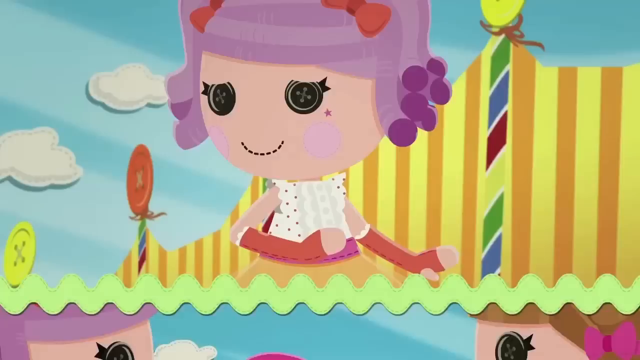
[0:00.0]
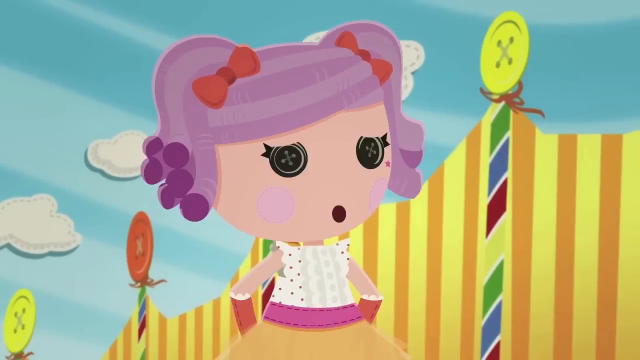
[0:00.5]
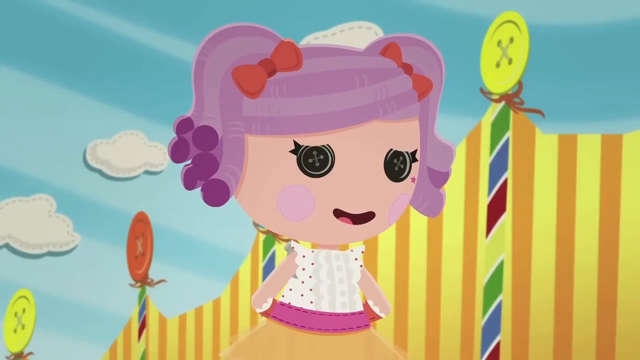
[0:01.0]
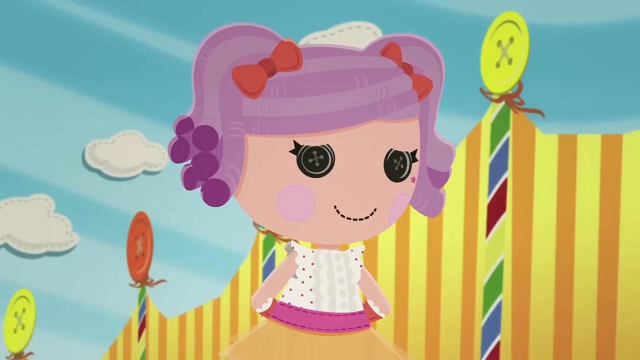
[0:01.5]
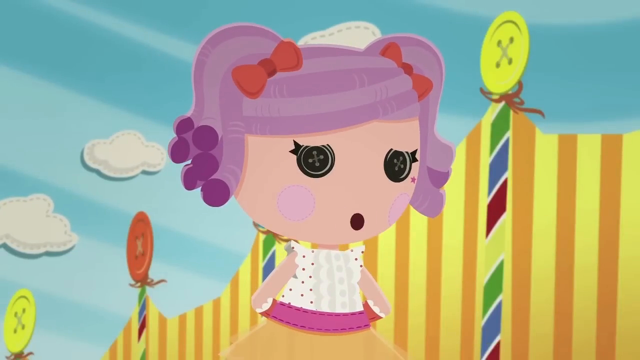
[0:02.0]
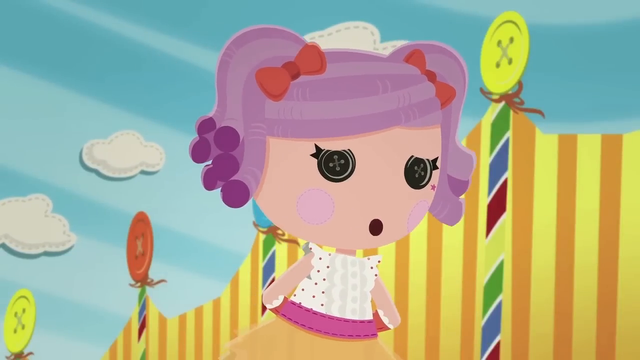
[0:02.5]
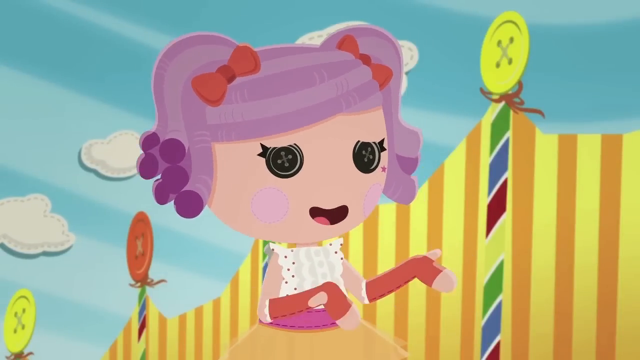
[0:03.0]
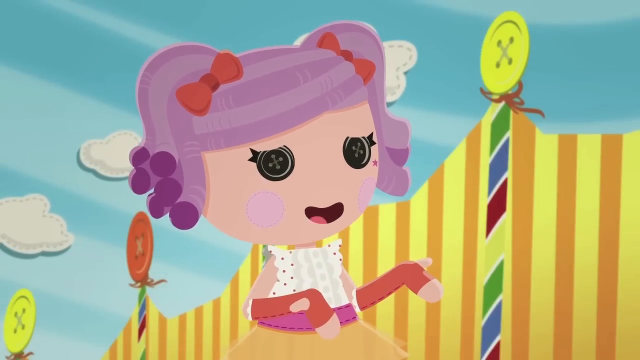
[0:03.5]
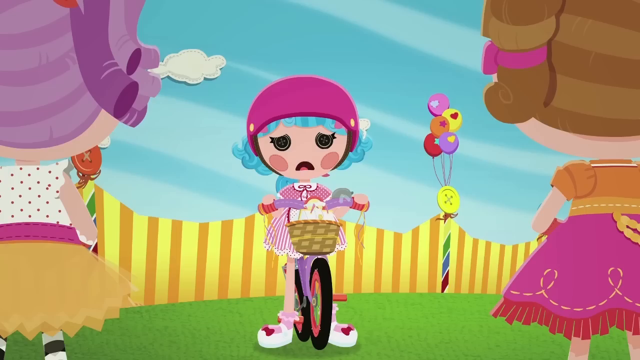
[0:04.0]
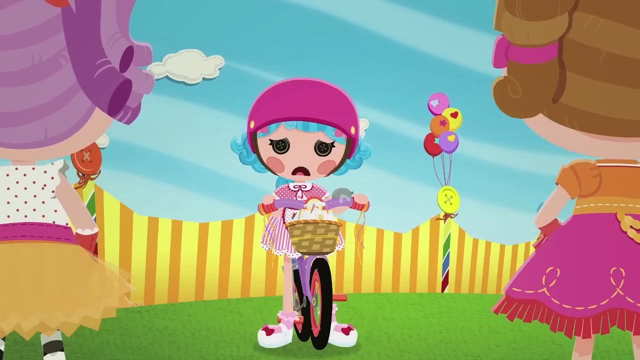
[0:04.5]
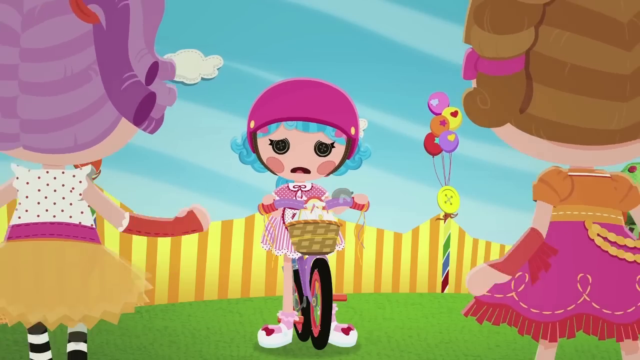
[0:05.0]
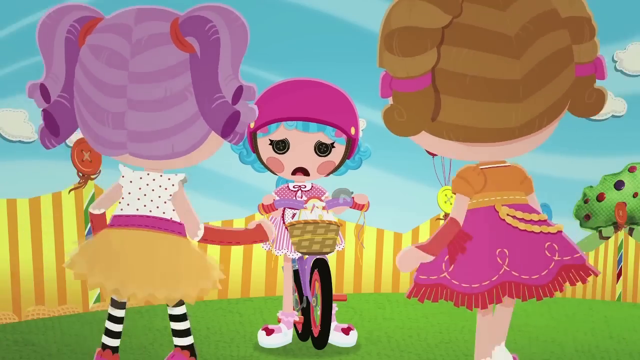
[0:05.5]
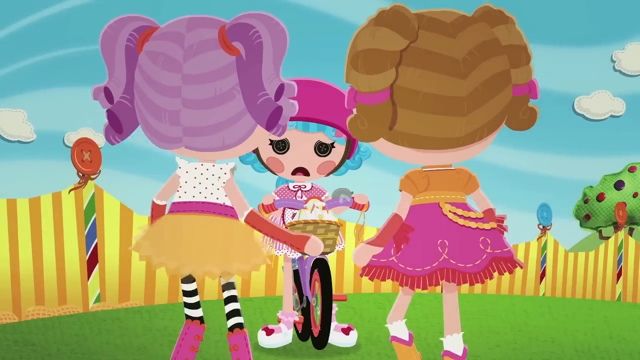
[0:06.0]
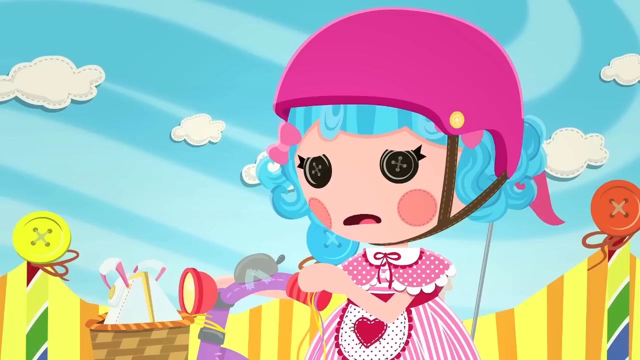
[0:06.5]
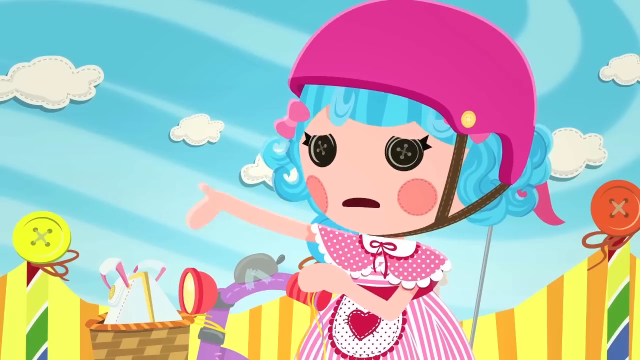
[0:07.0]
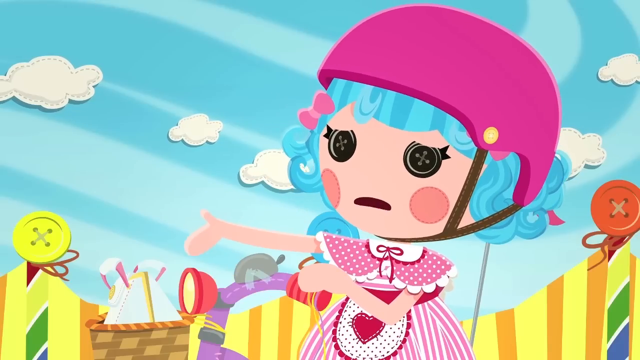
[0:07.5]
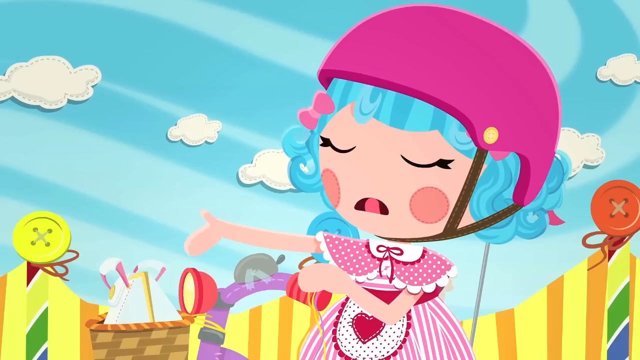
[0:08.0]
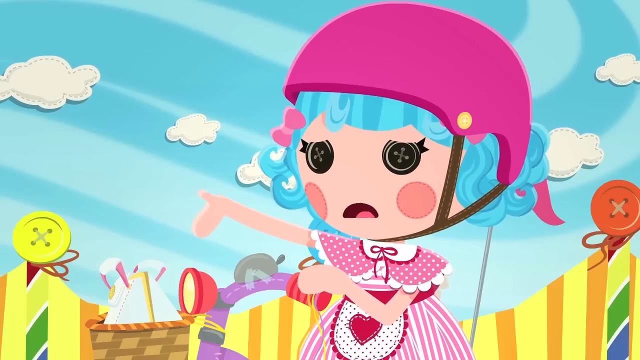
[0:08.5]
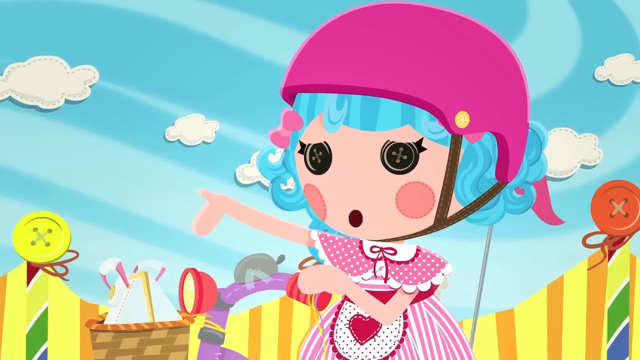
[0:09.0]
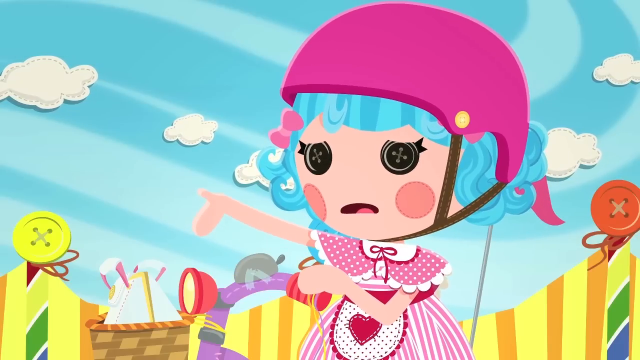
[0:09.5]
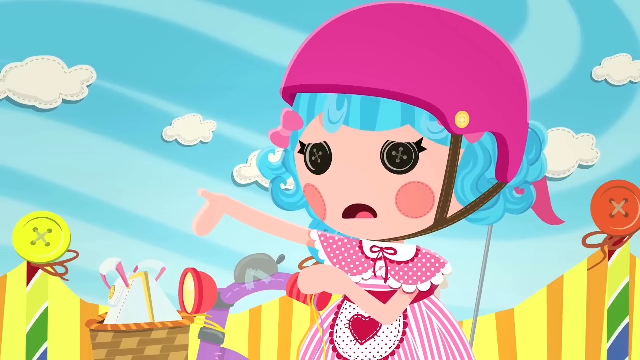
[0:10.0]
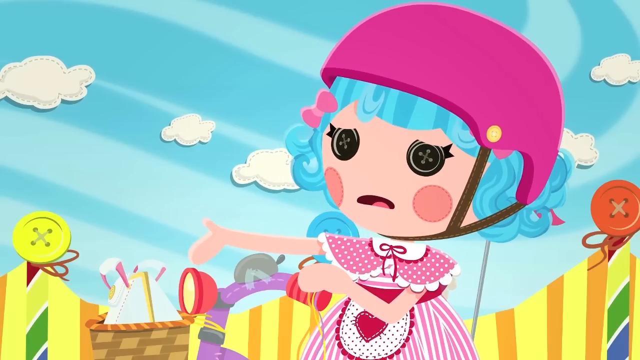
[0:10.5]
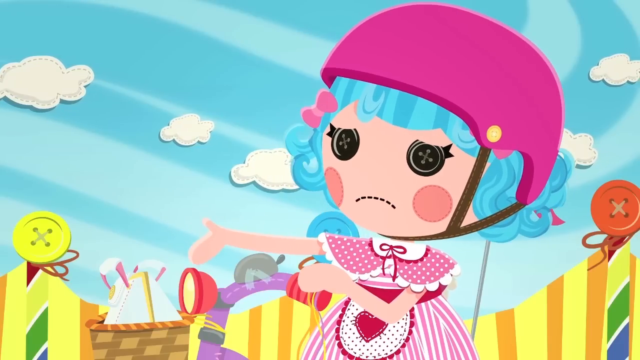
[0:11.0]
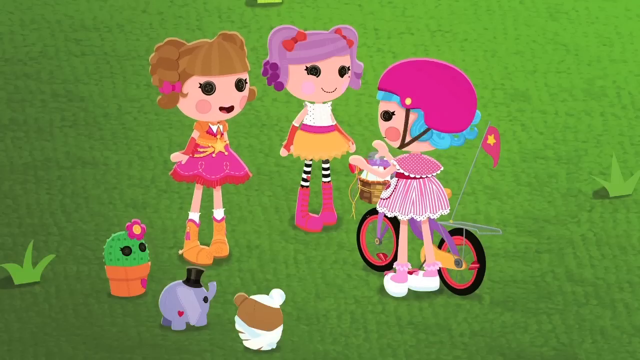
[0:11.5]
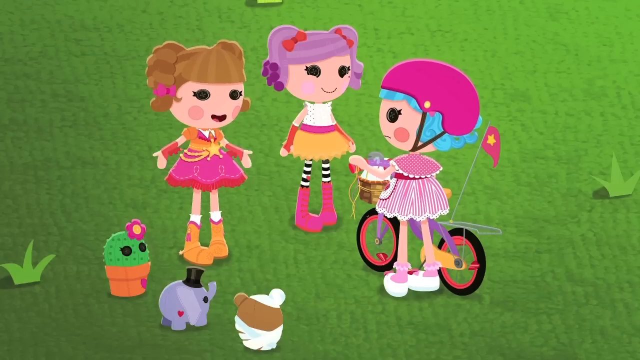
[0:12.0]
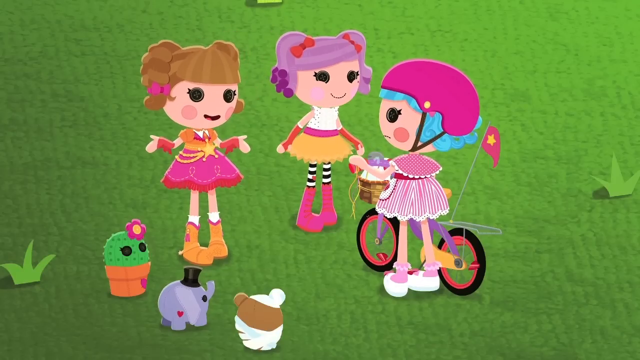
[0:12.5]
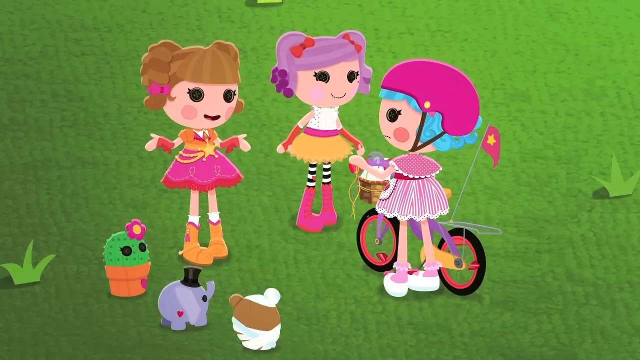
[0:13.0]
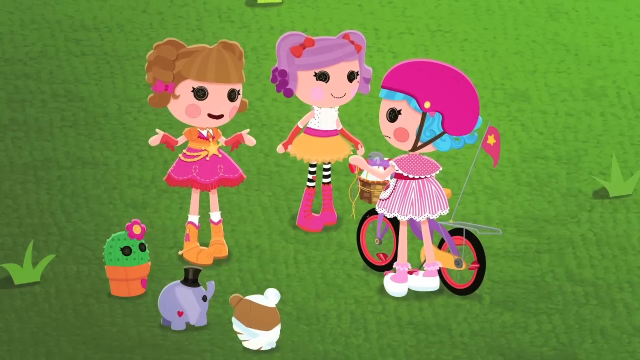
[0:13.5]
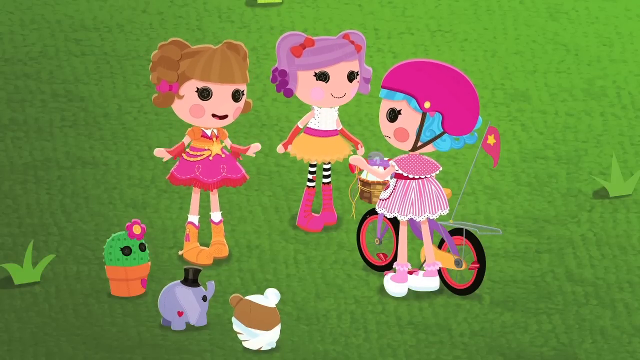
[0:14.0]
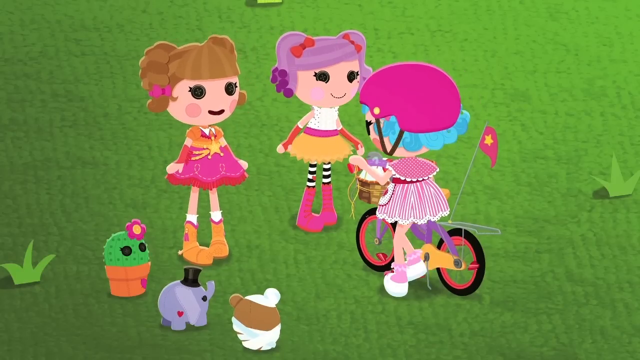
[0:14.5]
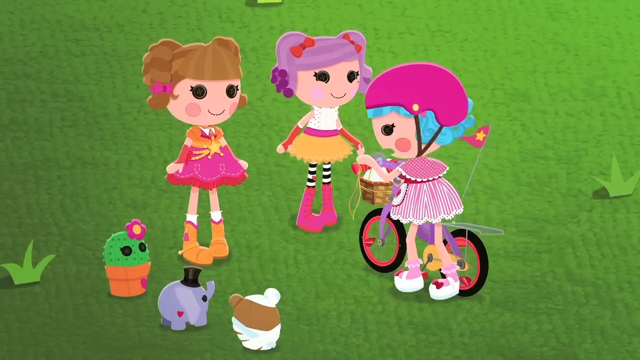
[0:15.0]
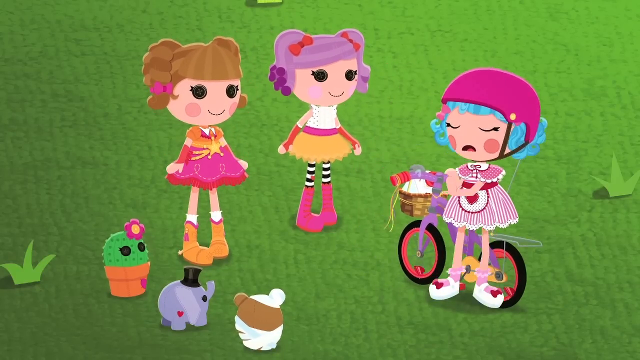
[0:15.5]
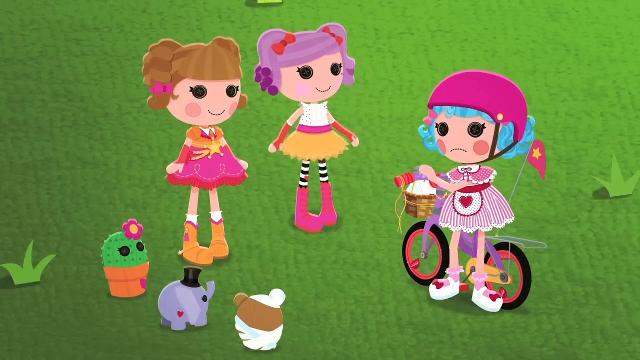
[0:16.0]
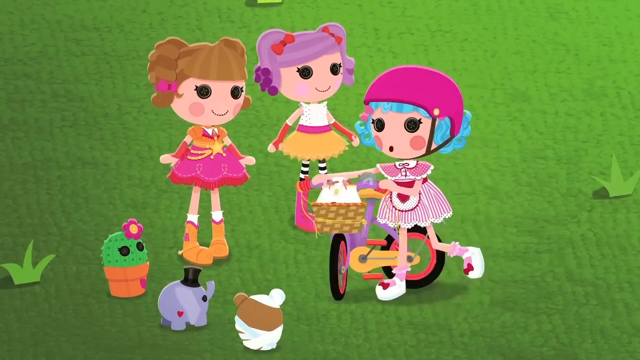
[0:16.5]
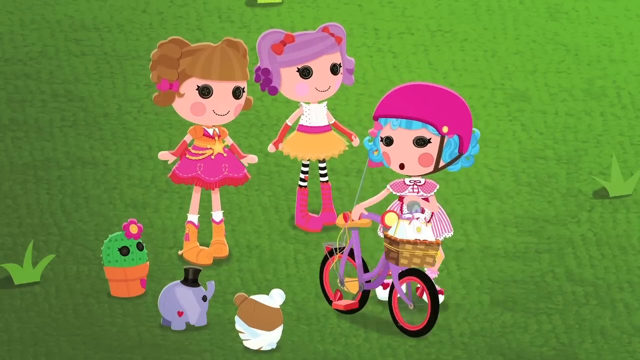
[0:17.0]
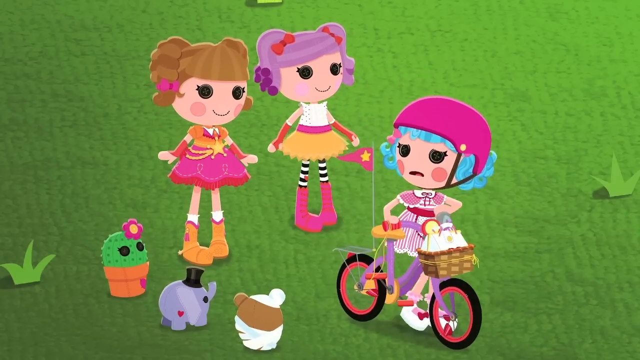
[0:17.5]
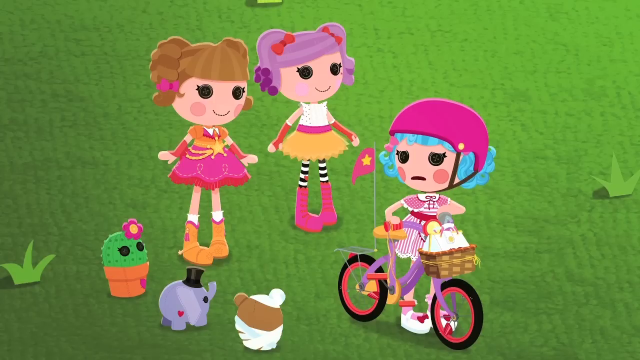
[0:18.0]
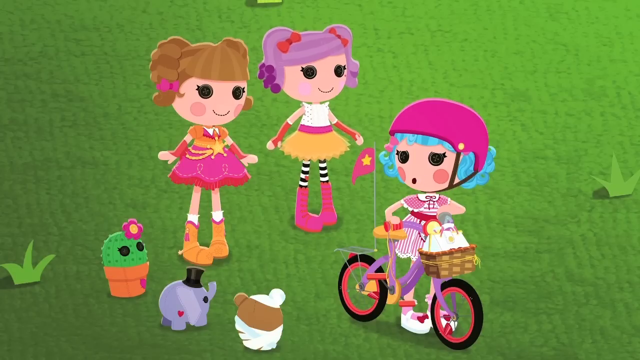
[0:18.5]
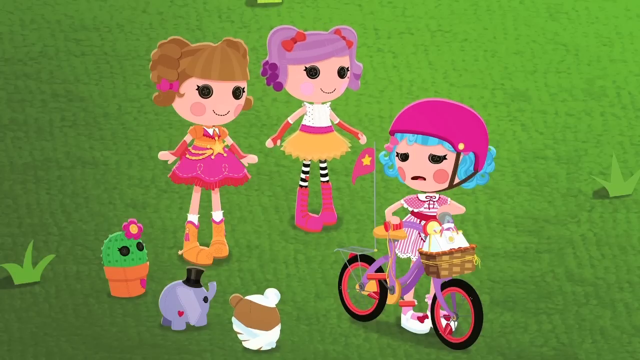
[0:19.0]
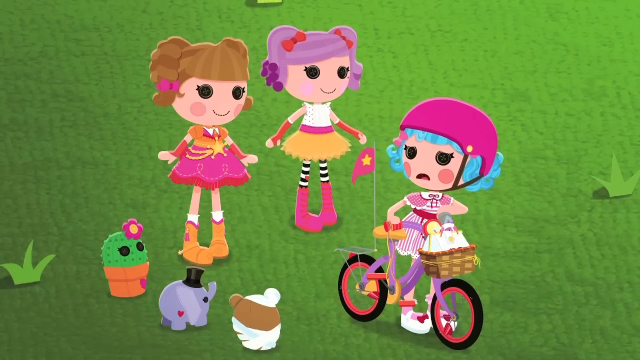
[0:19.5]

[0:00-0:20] This animated show features dolls with buttons for eyes, in a style that is very vibrant and kid-friendly. The dolls wear dresses and fancy outfits. The scene takes place in the middle of the day, in the grass, where three dolls converse with one another. One of them is on a bike and seems a bit sad, while the other two are very happy and try to talk to her; the one on the bike seems pretty sad as she turns away. There is a basket on the bike, and there are clouds in the sky. The animation is 2D and kind of drawn. The characters blink, and there are some small, tiny animals at the bottom, as well as a cactus.